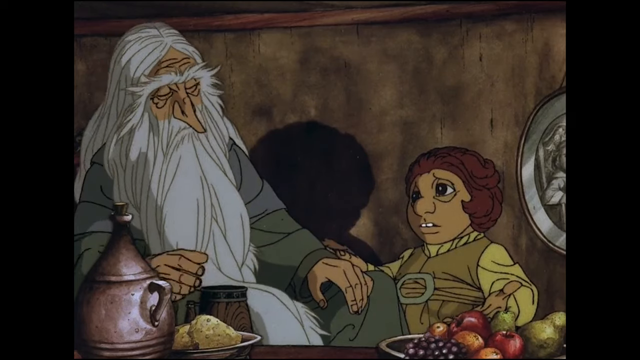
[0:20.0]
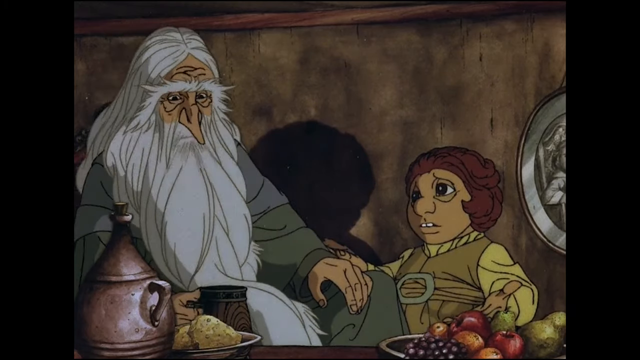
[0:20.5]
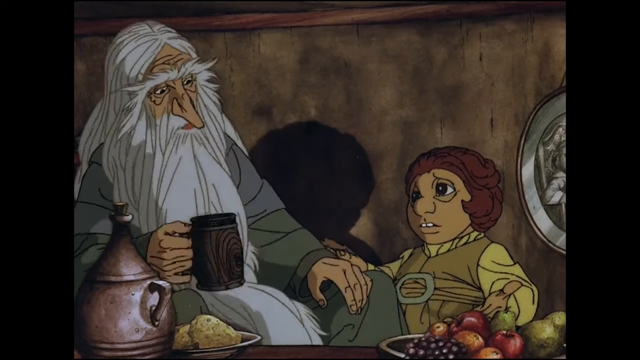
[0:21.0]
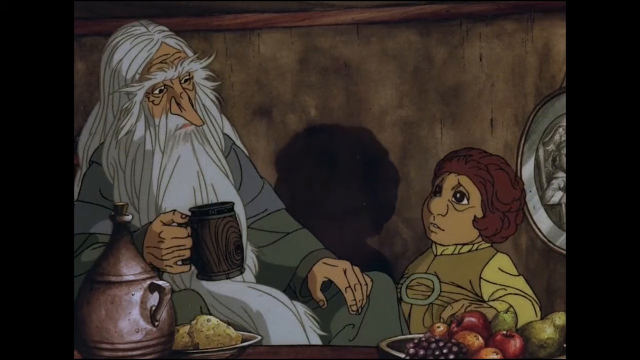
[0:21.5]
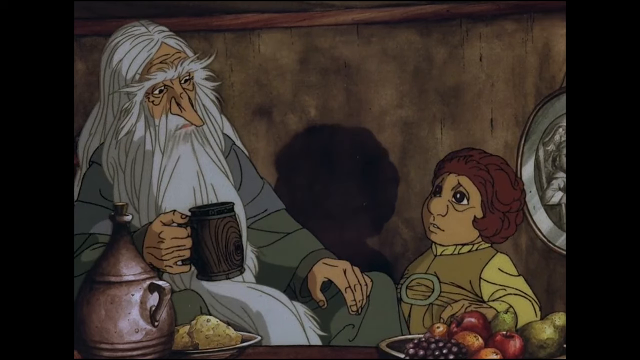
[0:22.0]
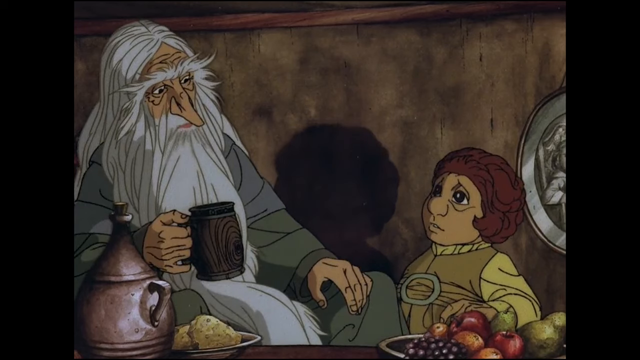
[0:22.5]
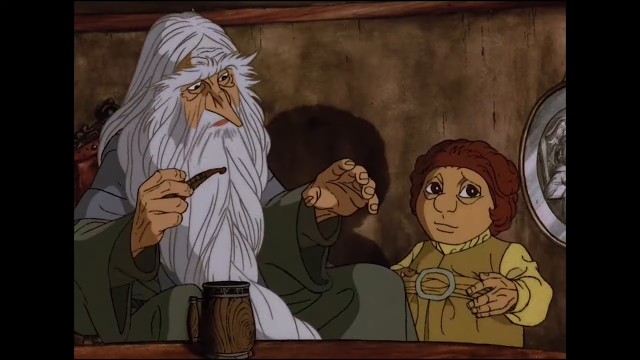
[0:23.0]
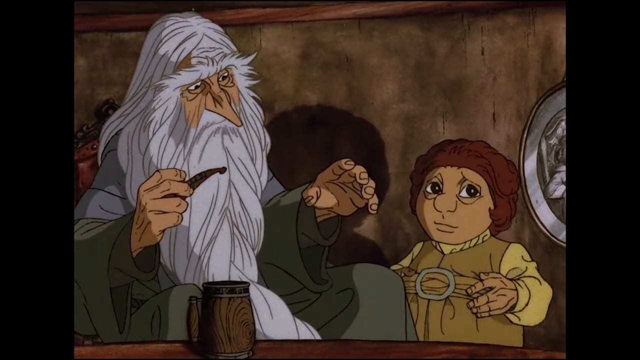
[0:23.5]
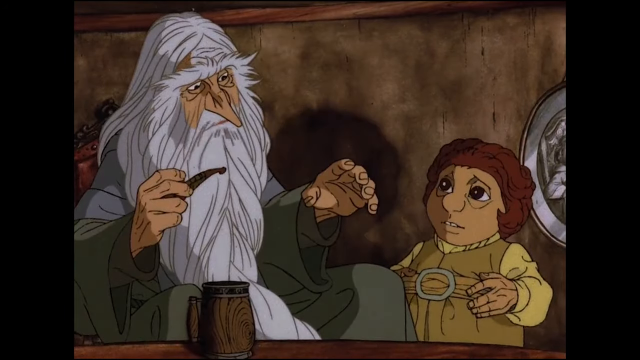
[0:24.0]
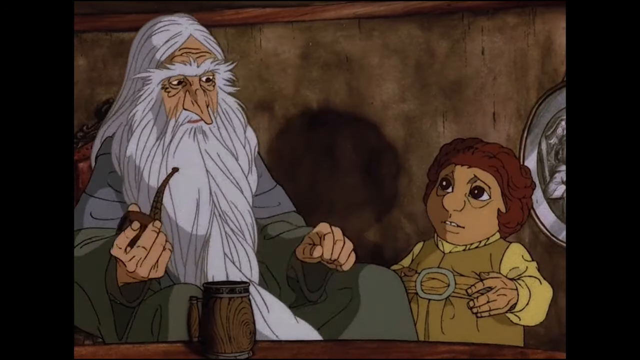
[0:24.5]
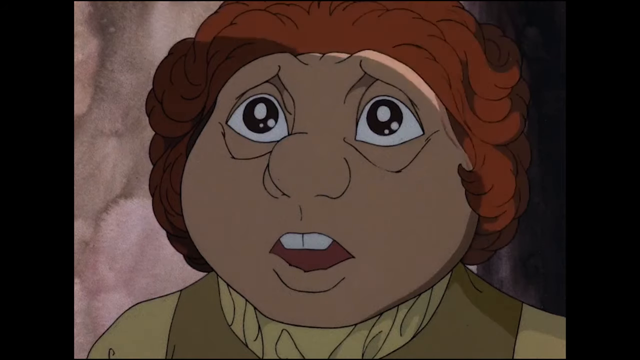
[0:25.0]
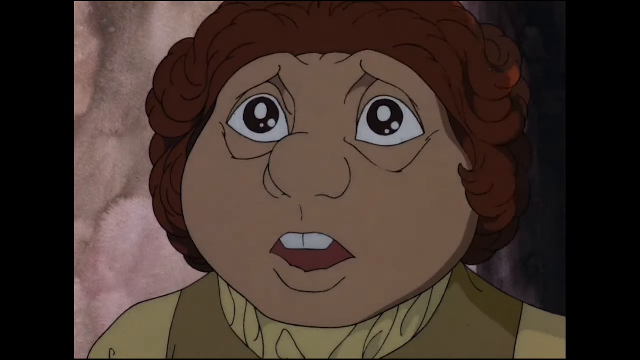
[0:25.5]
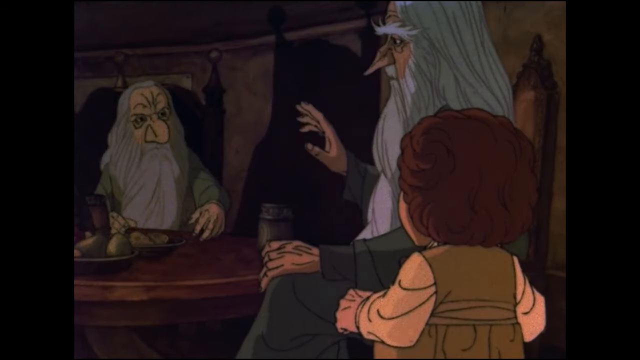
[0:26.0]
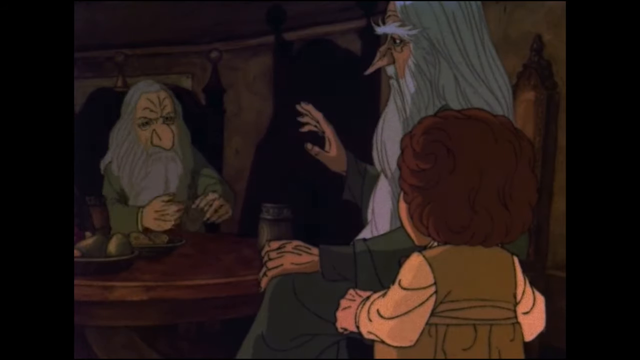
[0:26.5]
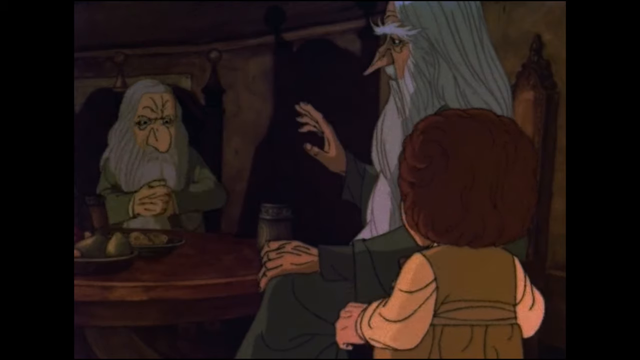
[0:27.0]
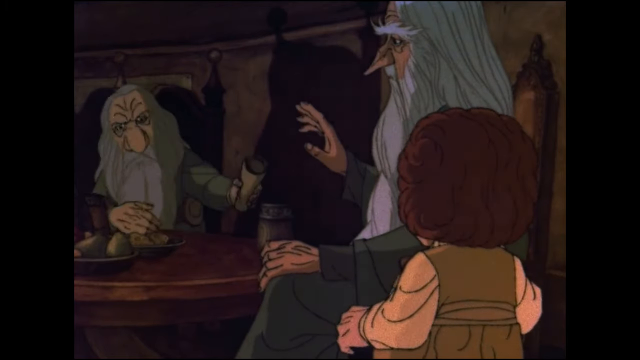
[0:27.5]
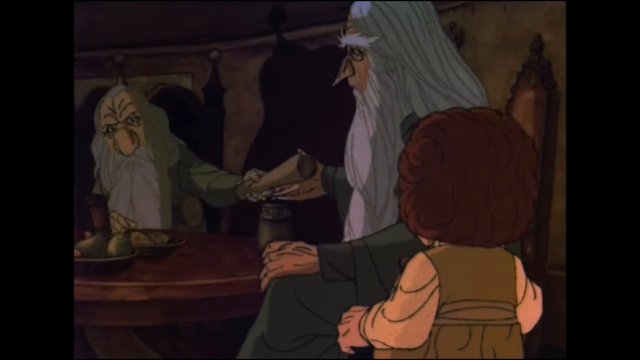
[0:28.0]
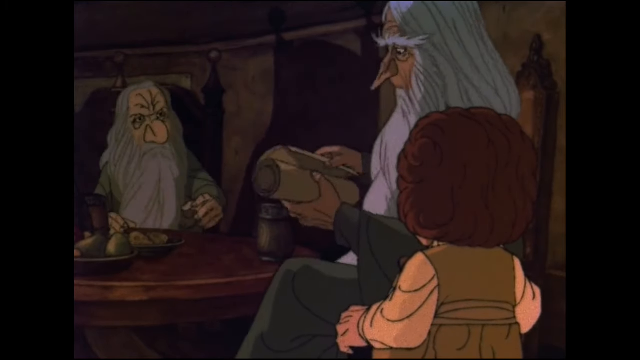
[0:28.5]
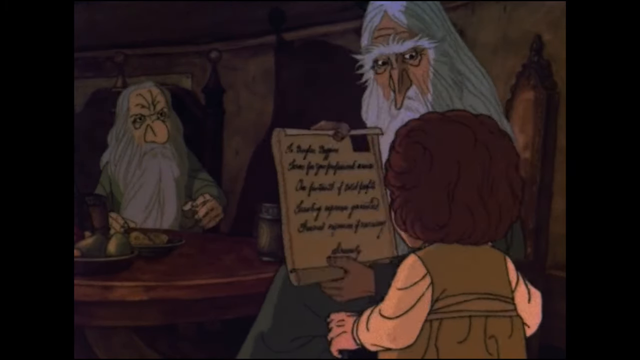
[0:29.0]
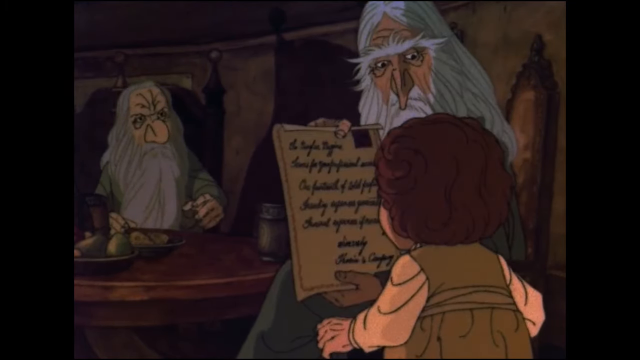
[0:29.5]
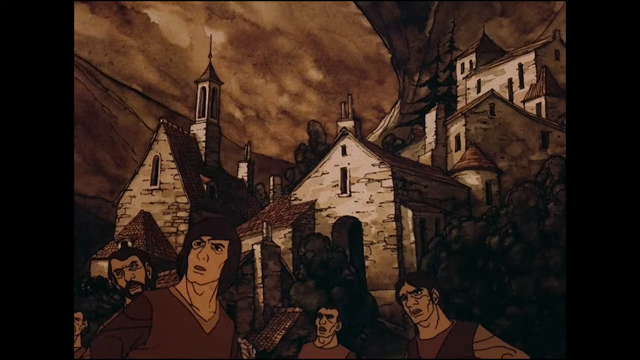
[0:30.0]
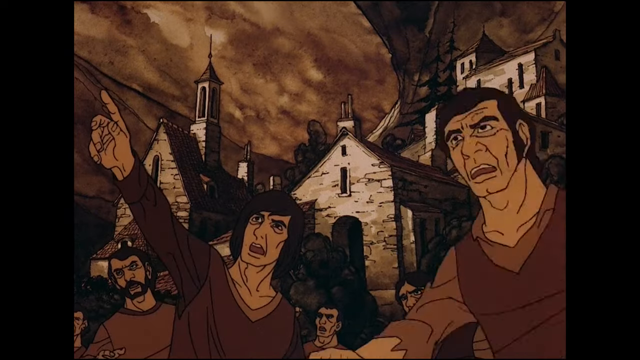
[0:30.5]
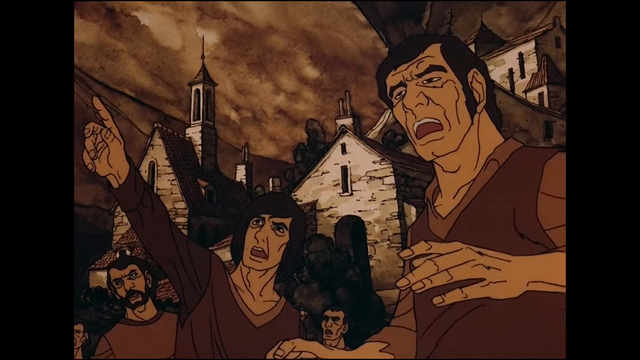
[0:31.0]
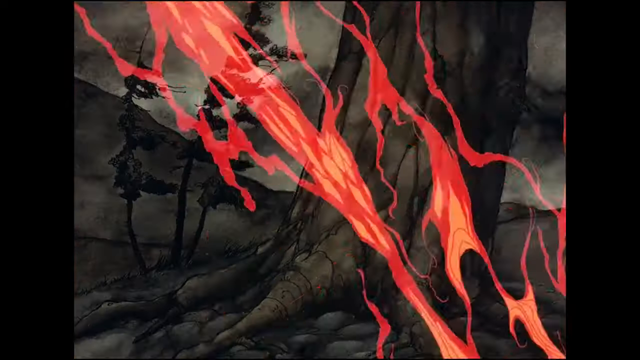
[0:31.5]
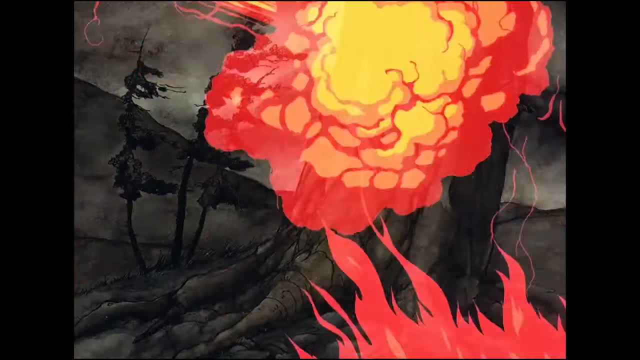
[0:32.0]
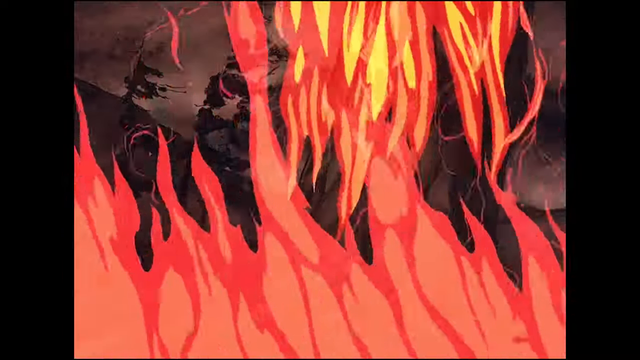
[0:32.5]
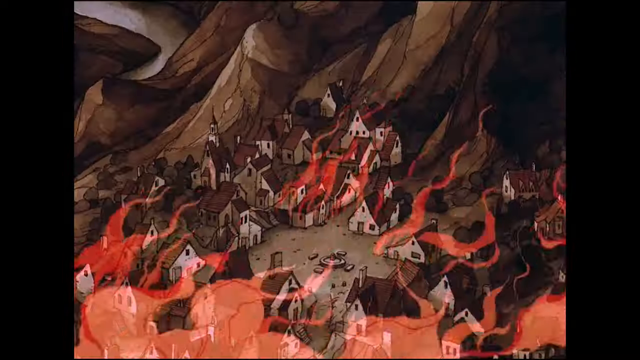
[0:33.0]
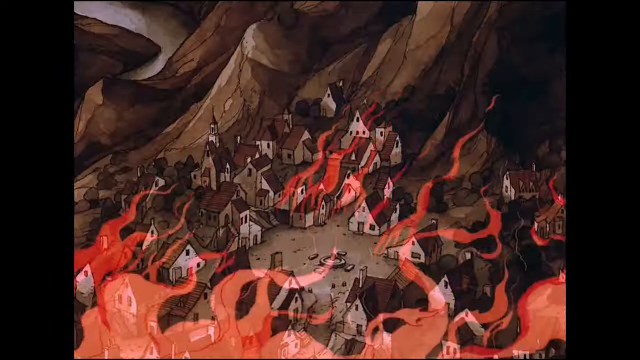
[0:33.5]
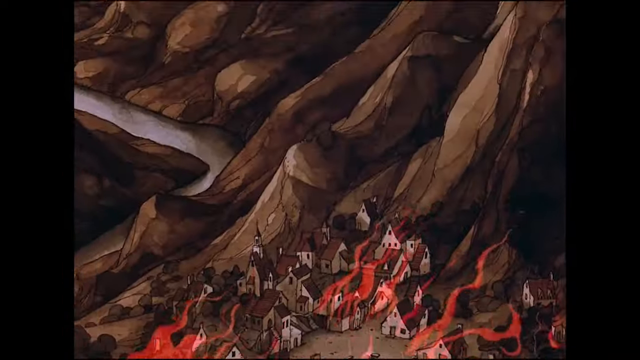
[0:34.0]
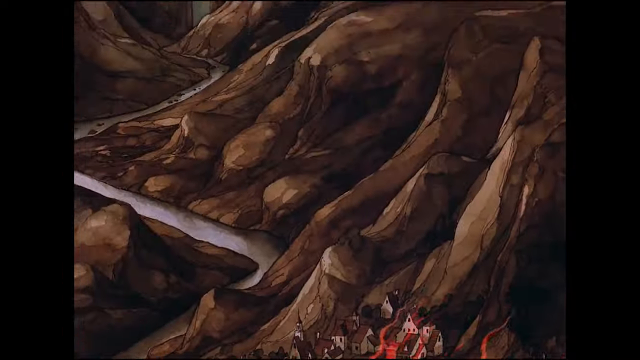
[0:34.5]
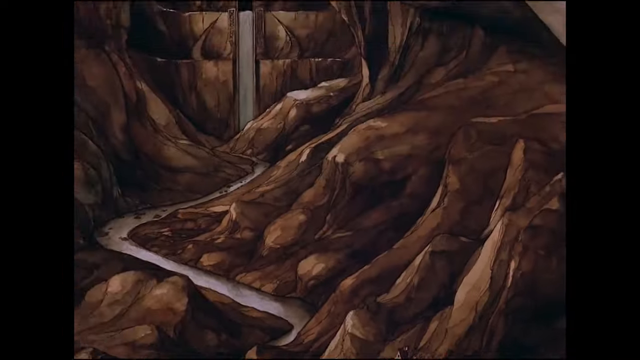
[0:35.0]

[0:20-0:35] In an animated scene, a man with a very long beard holds a mug and talks to a small person by his side in what appears to be an old-fashioned setting. The man makes a number of gestures toward the small person while talking, and a close-up shows the small person looking shocked or scared. Another man sitting beside the bearded man gives him a scroll, and the bearded man opens it up to show it to the smaller person. A shot then shows a village with people outside it looking scared; one points at something off camera while others look on with their mouths open in fear. The scene cuts to a fire starting and burning the village down, then zooms out to show the entire village on fire with a river running beside it.